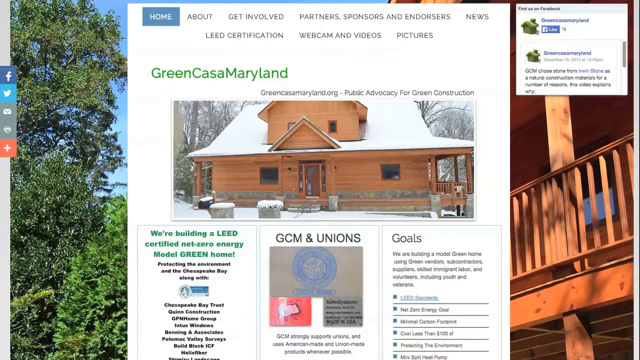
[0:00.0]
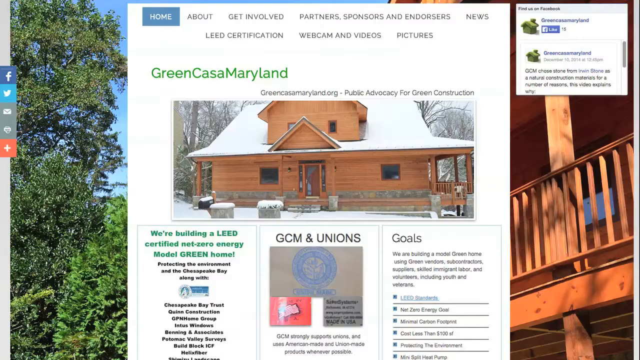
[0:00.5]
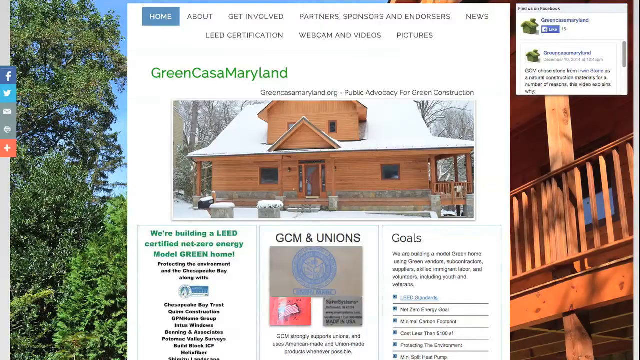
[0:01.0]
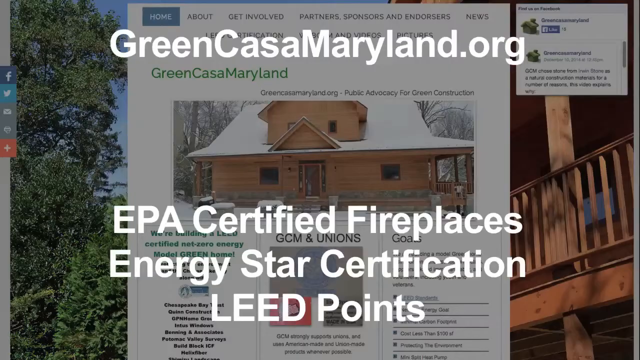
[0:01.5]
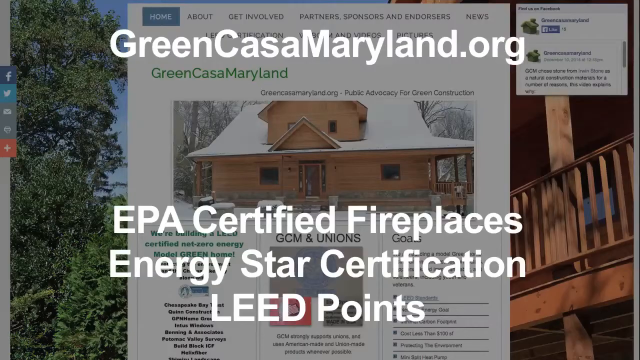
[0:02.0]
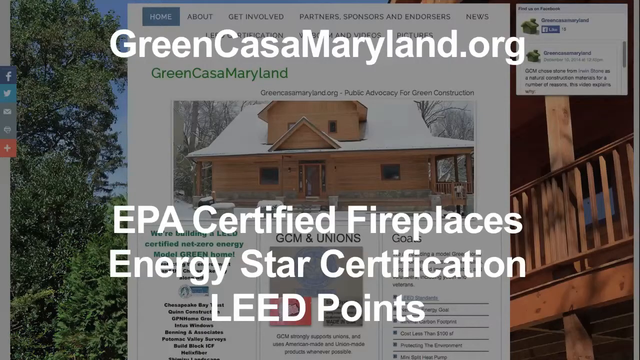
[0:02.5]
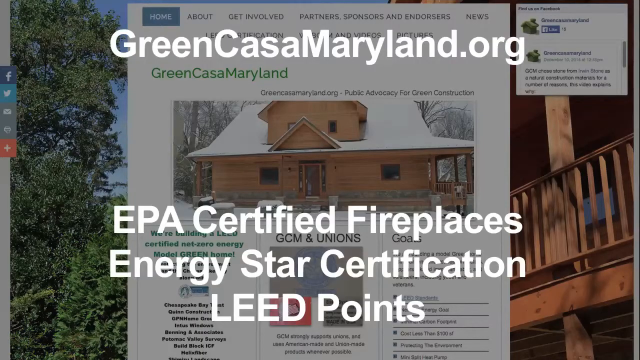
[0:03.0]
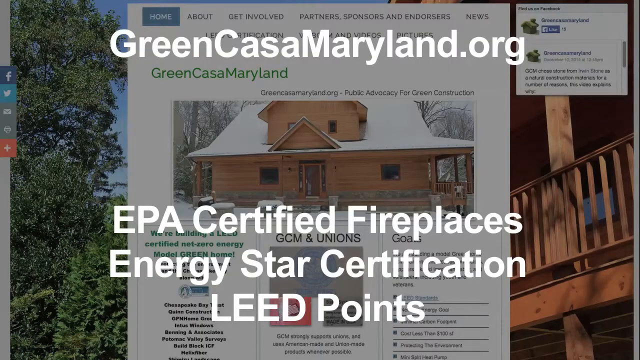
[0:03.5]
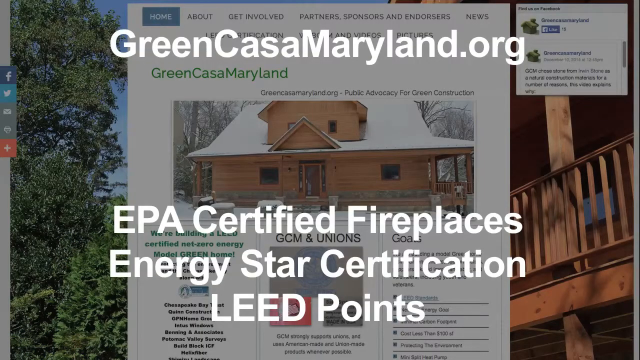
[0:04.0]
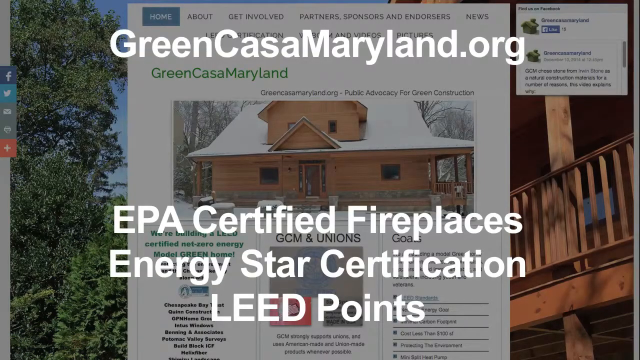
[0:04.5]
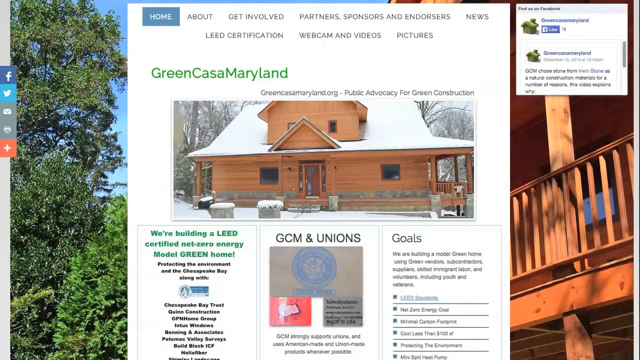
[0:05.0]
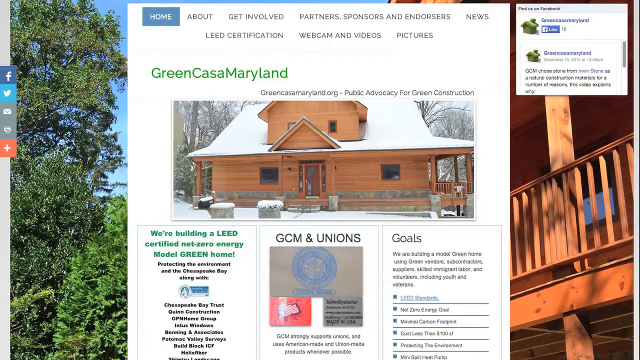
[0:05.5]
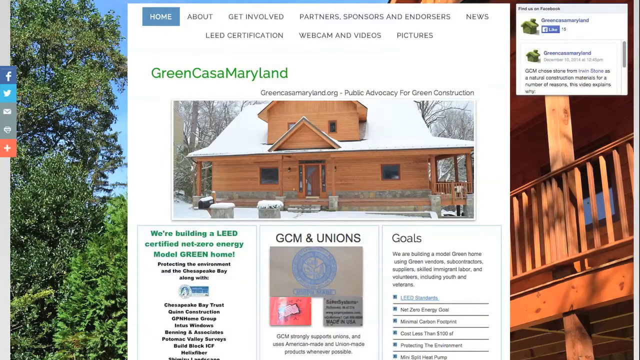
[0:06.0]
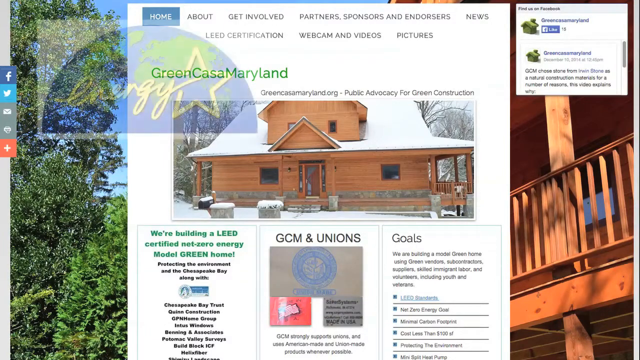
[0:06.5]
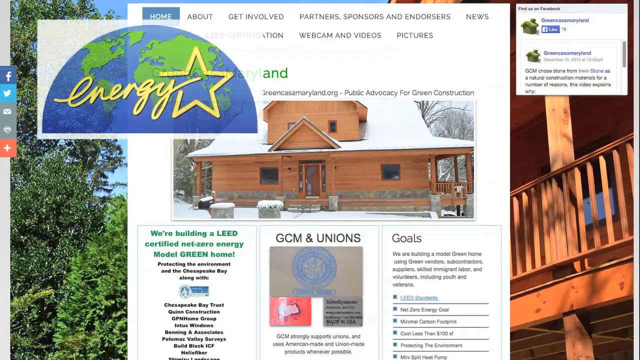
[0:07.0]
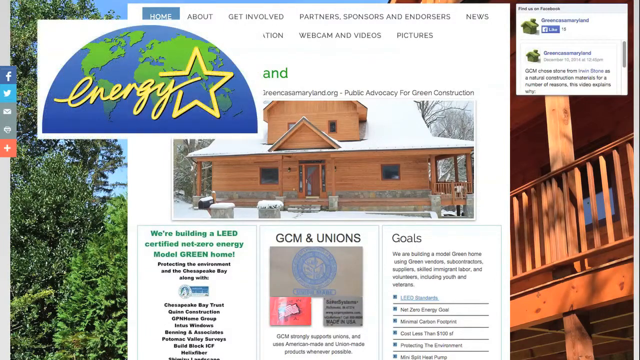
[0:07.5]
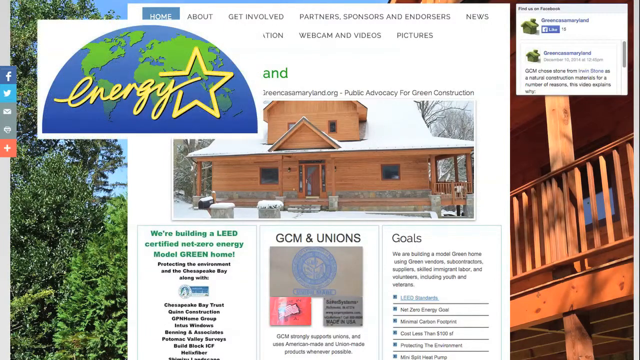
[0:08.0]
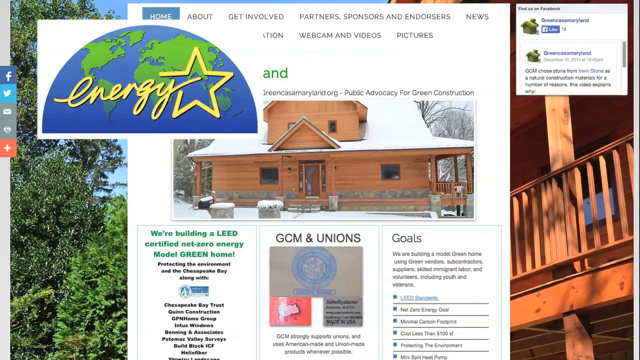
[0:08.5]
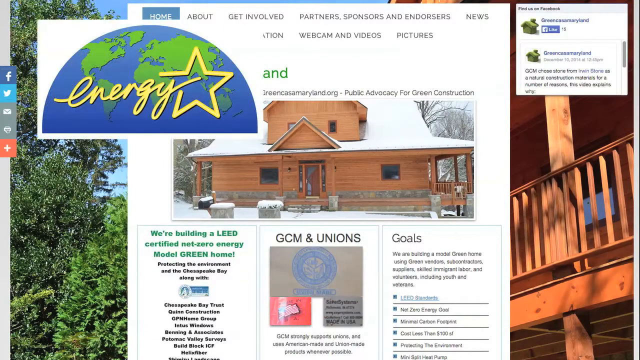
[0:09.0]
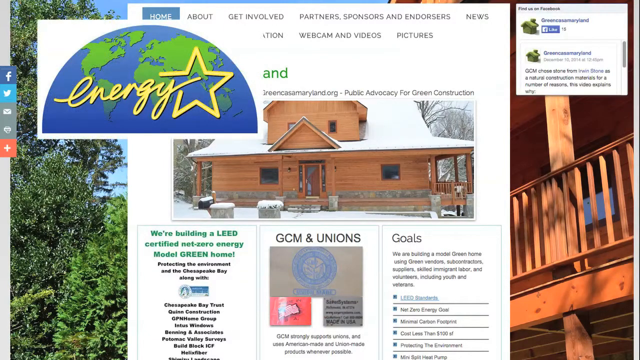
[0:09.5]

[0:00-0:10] A website for the Greencastle Maryland organization is shown, mentioning EPA certified fireplaces. The page includes sections for getting involved and for partners and sponsors, along with the organization's logo and goals written on the site. Text on the site mentions a "net zero energy model green home".